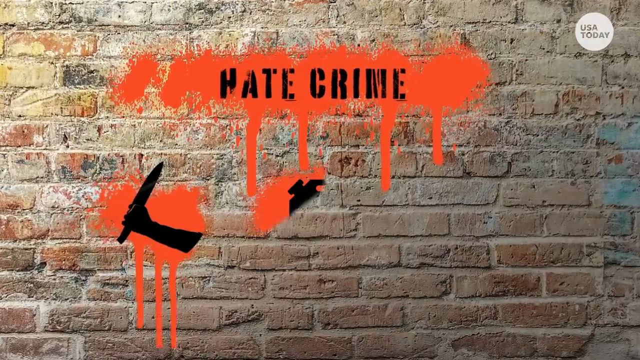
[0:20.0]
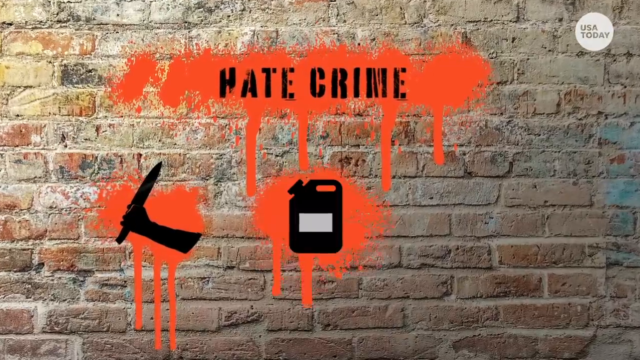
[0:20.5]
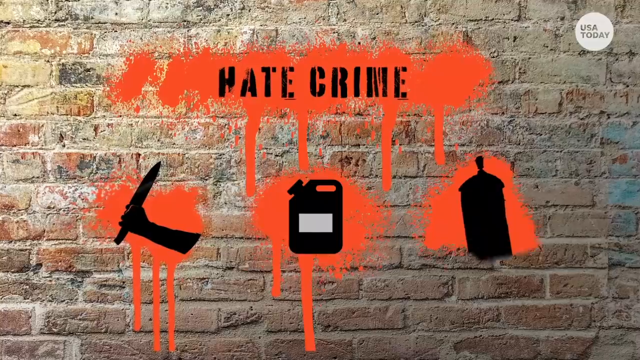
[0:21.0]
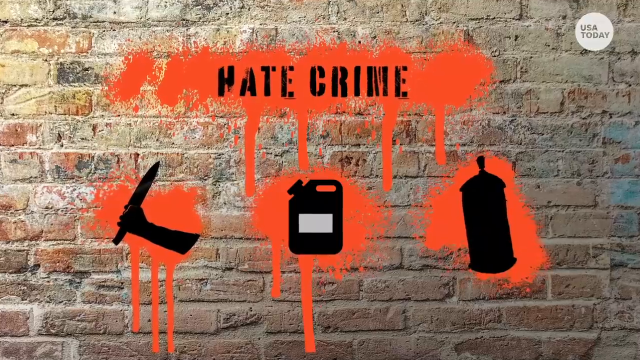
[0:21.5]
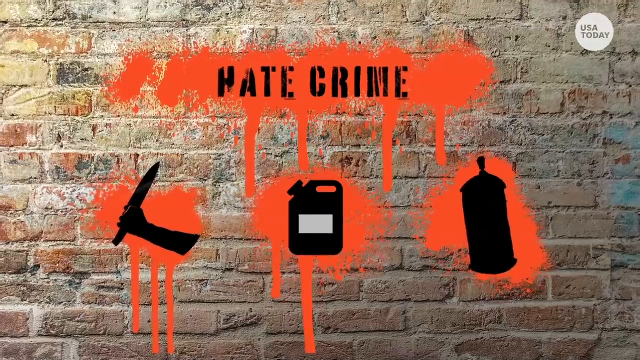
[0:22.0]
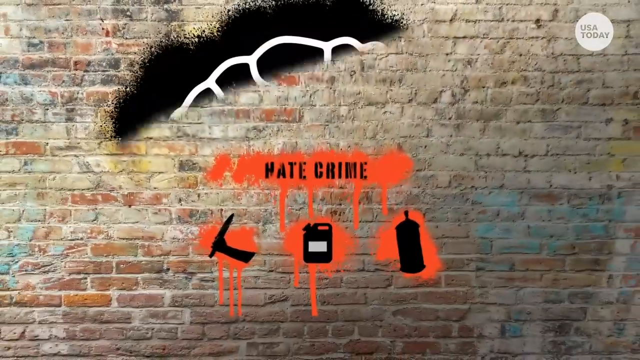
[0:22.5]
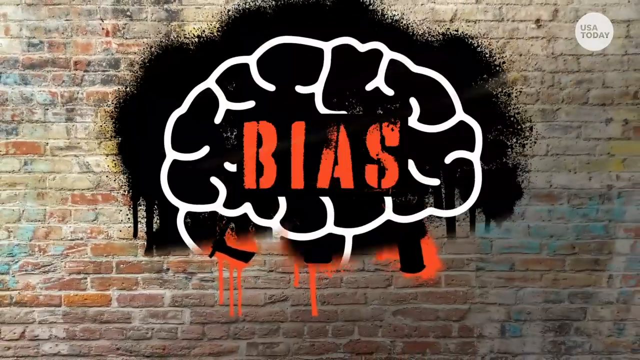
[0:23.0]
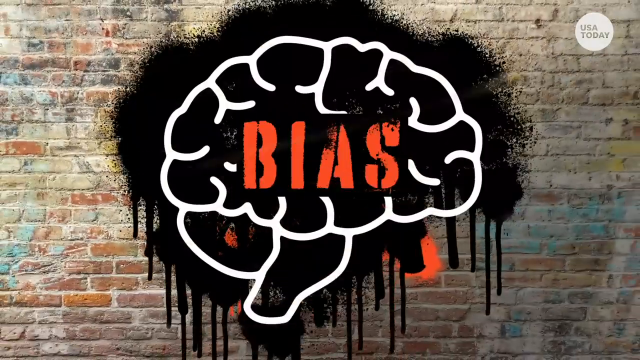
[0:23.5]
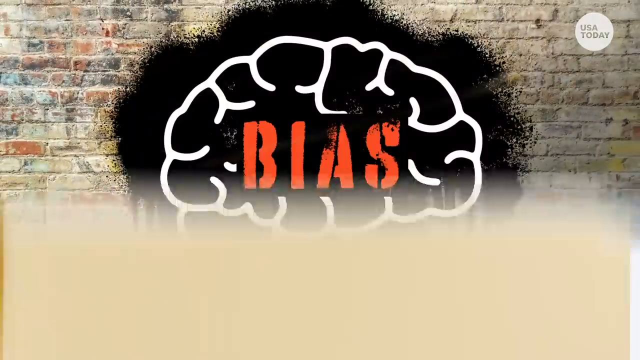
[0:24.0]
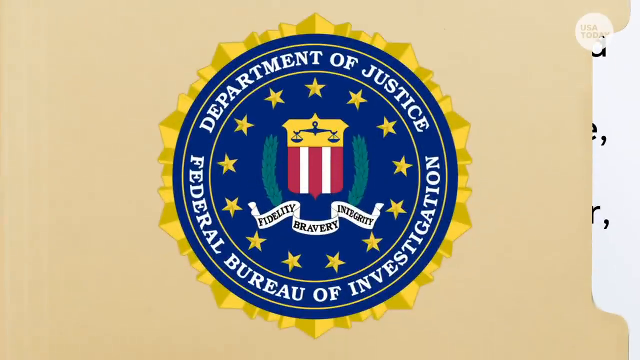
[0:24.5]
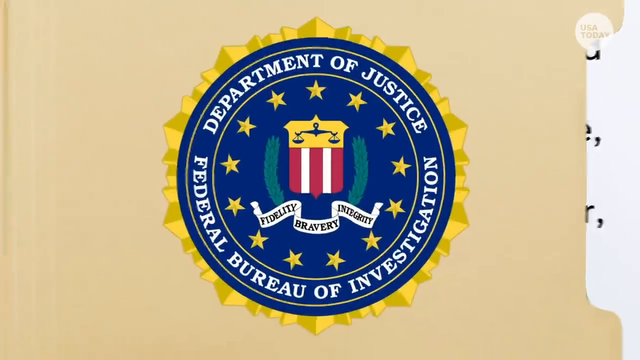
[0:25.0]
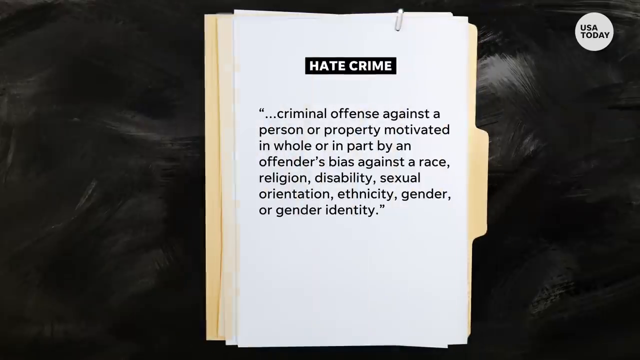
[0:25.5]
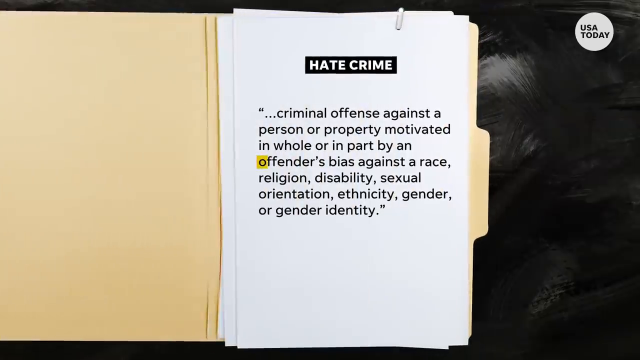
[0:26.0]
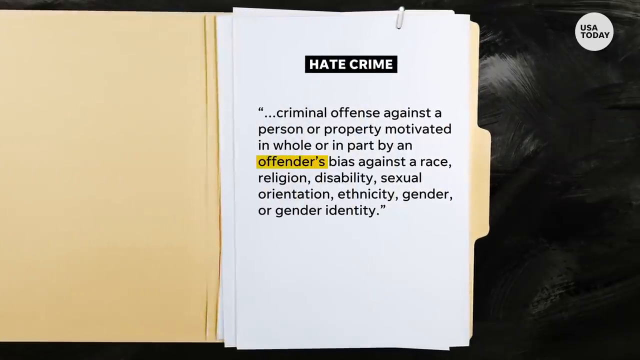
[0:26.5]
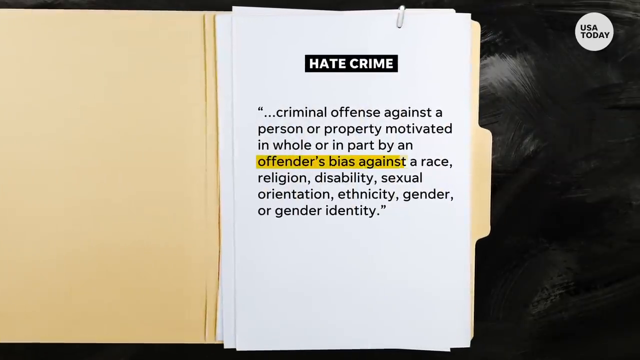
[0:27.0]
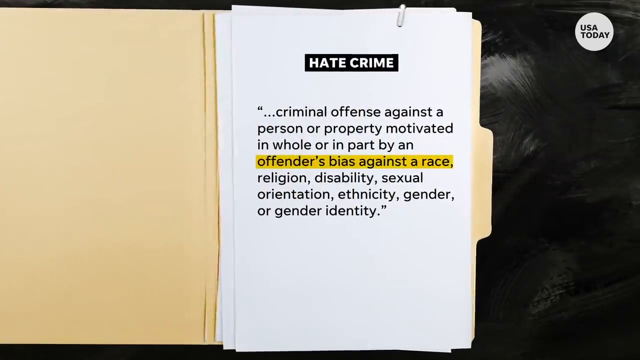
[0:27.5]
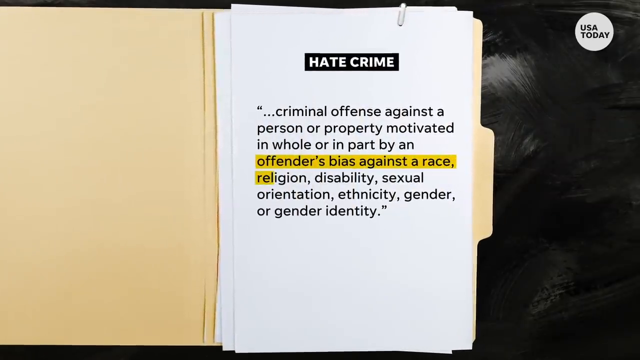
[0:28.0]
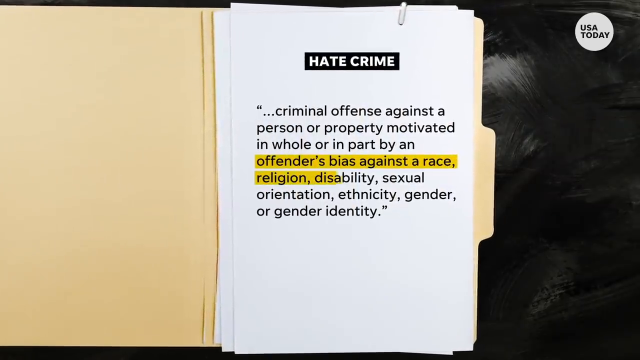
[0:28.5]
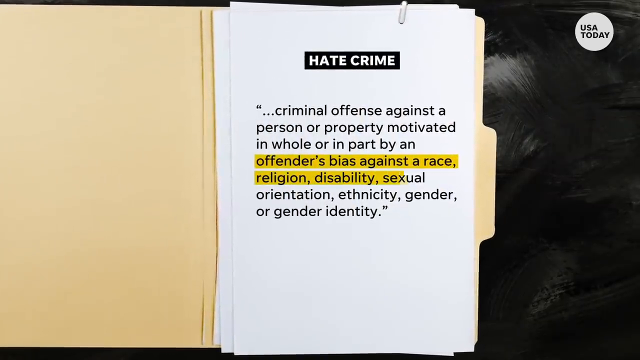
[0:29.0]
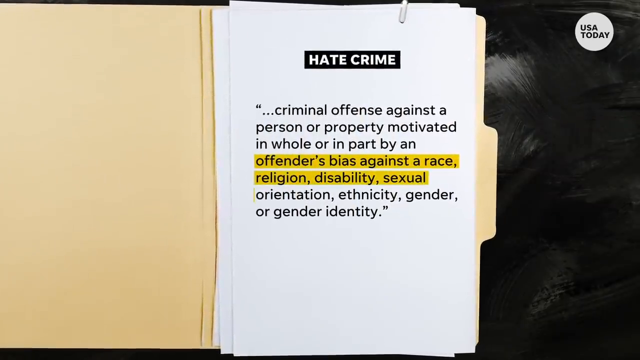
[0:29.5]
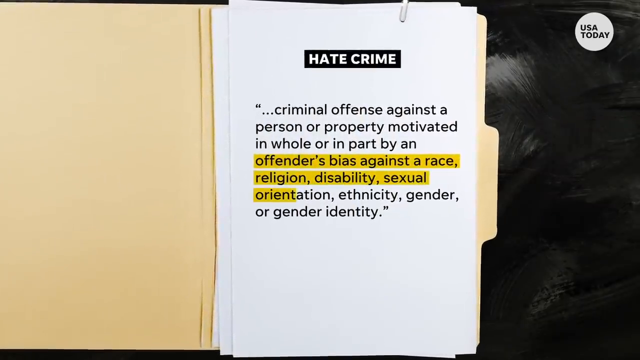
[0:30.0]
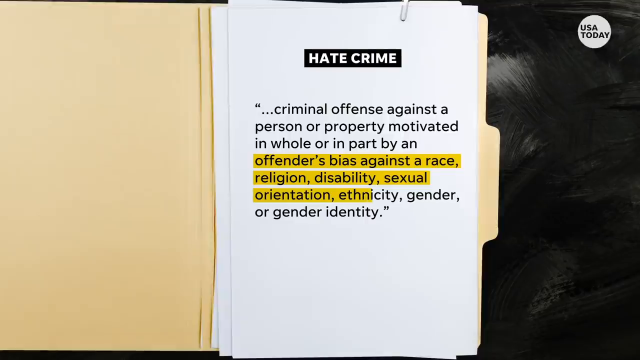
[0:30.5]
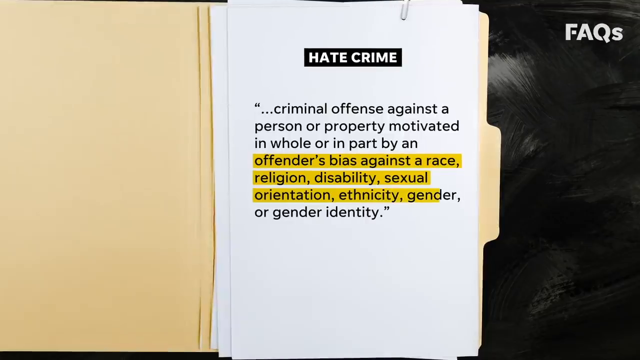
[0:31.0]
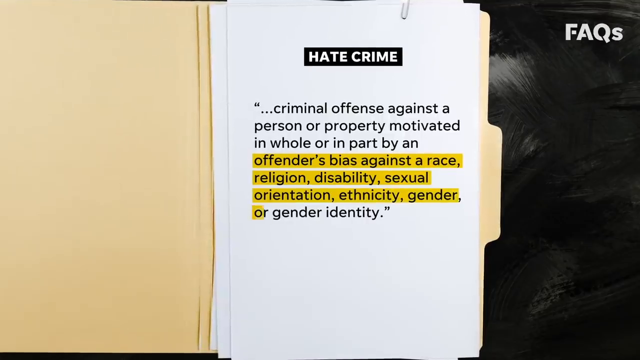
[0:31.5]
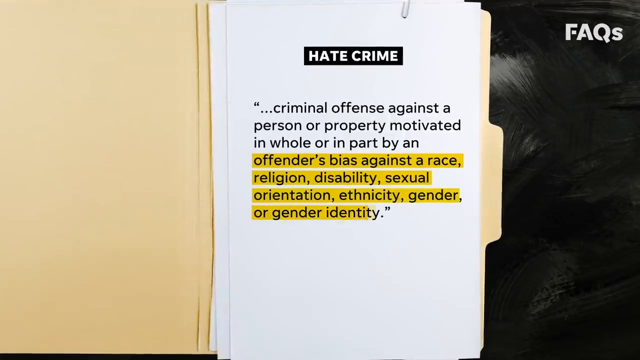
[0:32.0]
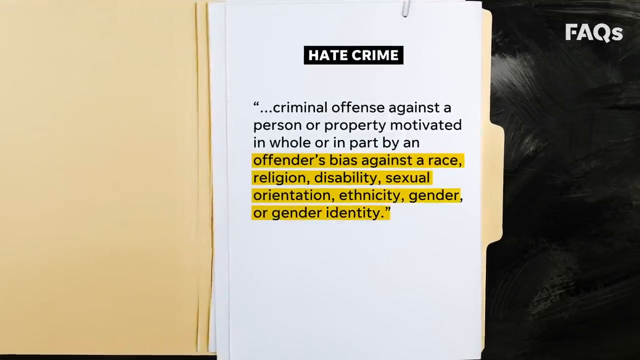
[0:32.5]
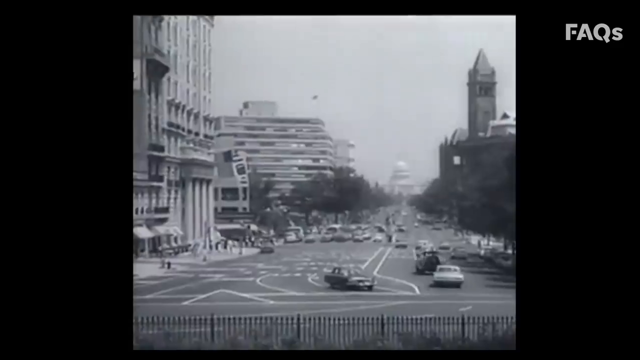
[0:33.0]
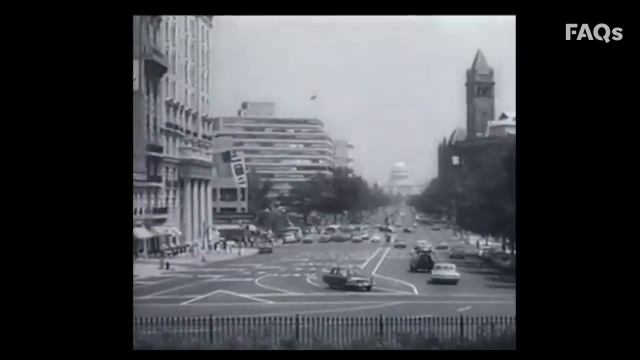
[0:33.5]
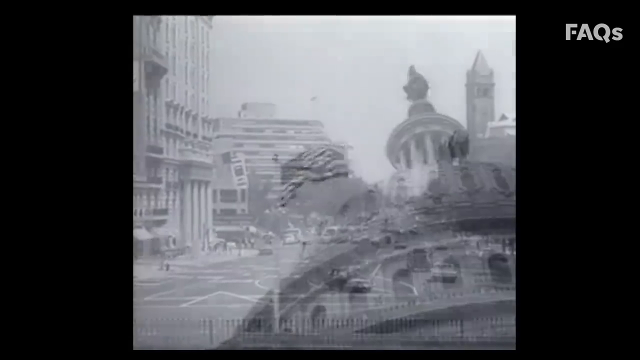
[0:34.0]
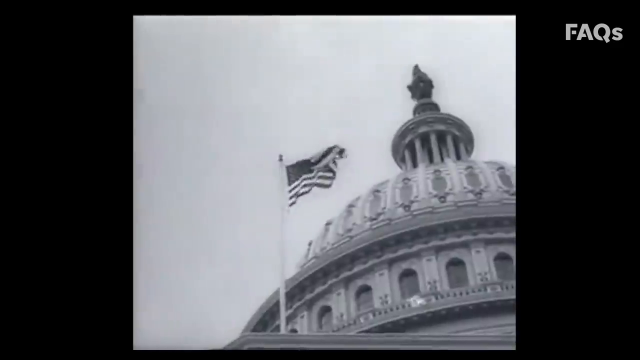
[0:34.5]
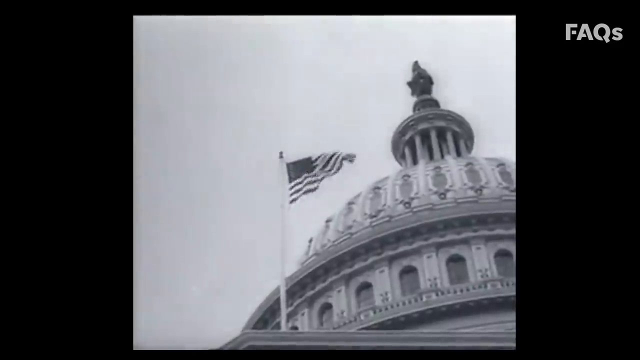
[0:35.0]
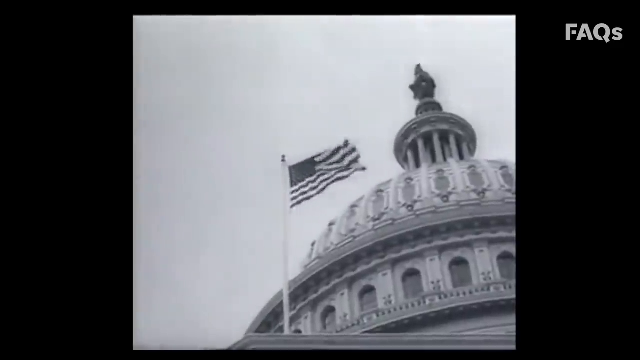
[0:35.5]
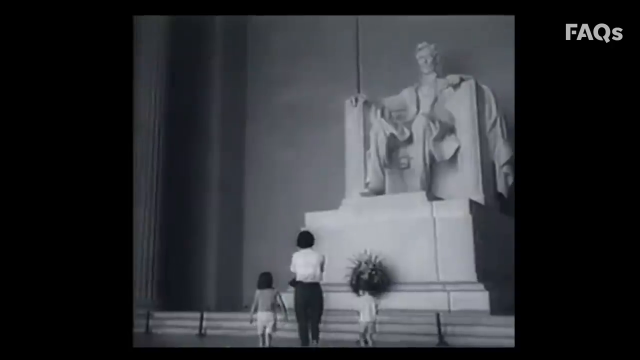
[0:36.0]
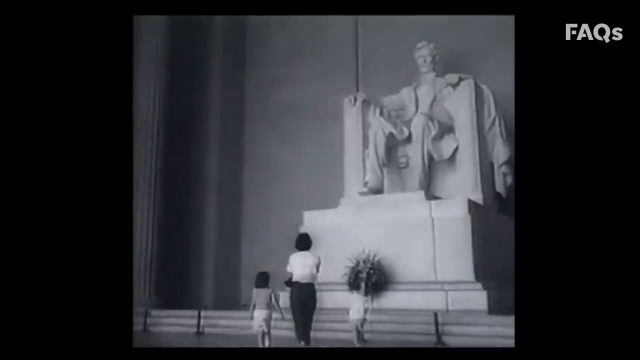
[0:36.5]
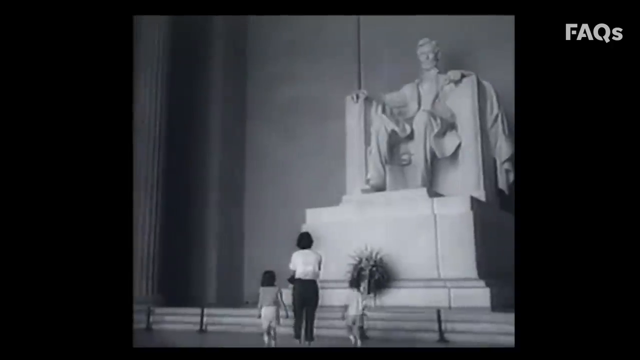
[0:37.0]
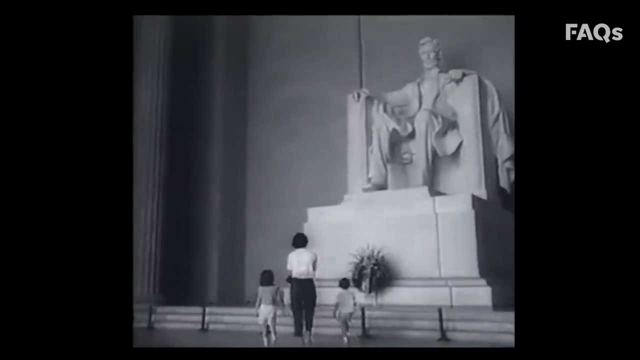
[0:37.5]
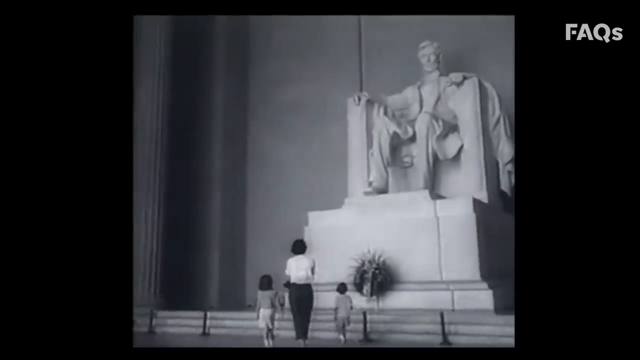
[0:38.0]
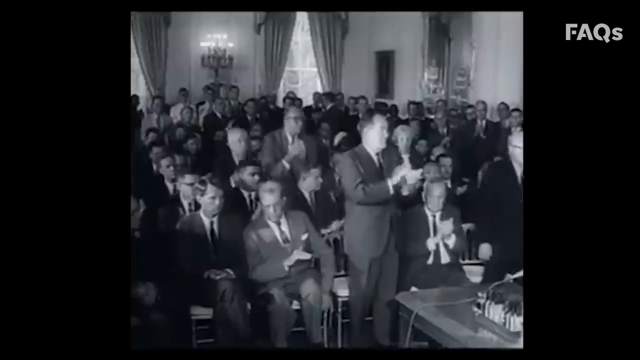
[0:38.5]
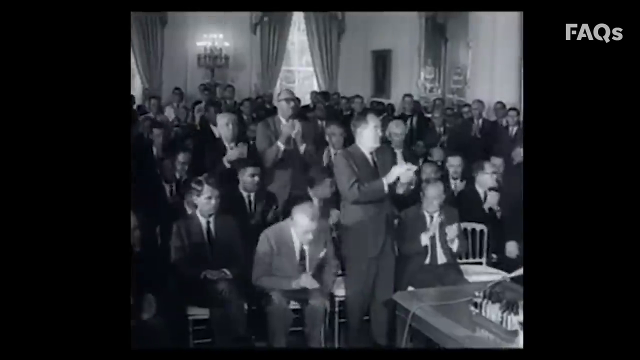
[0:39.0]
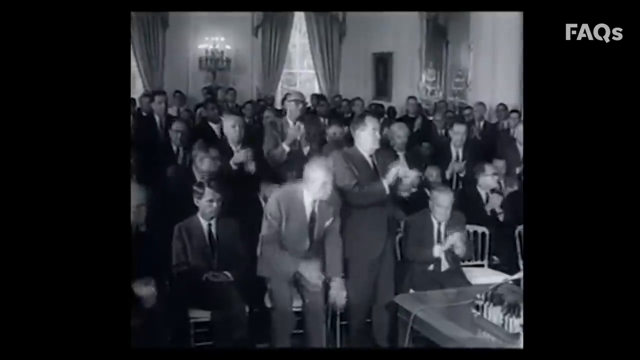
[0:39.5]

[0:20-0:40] The video, from the channel USA Today, apparently serves as a promo for a show. It opens with graffiti on a wall, including a man holding a knife and a canister. This is overridden by black graffiti with the word "bias" on it, which is in turn overshadowed by a federal Department of Justice badge with a file that opens to the definition of a crime: "a criminal offense against a person or property motivated in a whole or in part by offenders bias against race, religion, disability, sexual orientation, ethnicity, gender, or gender identity," with particular emphasis drawn to the part about offenders bias against race, religion, disability, sexual orientation, ethnicity, gender, or gender identity. Old footage then appears to show Washington, with a United States flag flying high and a statue of Abraham Lincoln seated on a chair. A woman with her children is looking at the statue.